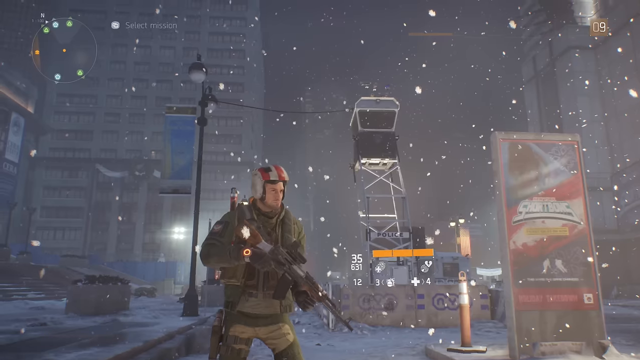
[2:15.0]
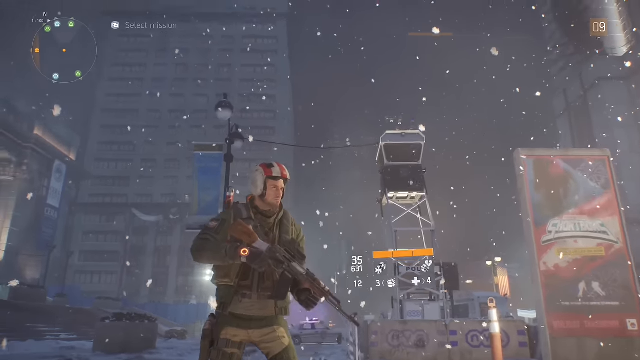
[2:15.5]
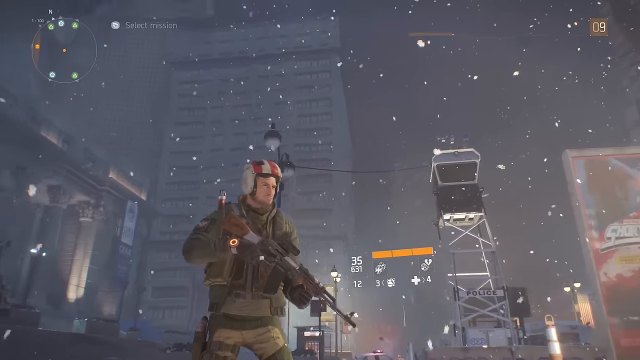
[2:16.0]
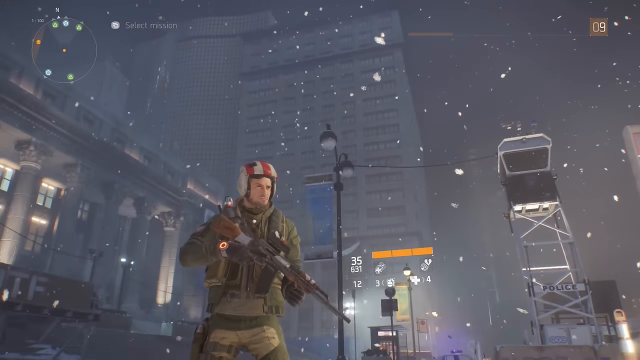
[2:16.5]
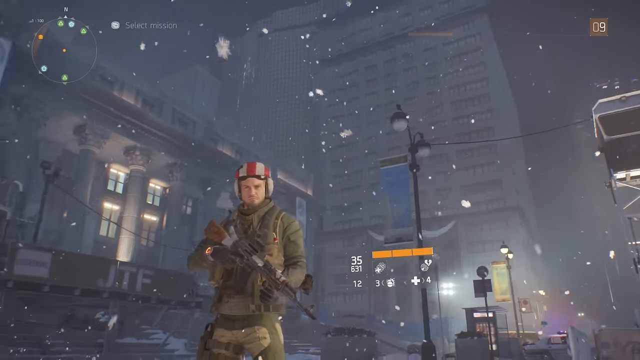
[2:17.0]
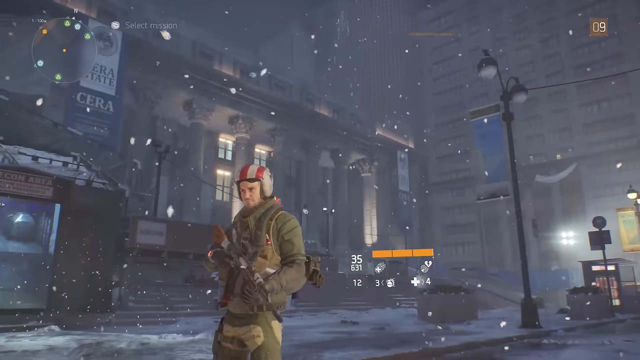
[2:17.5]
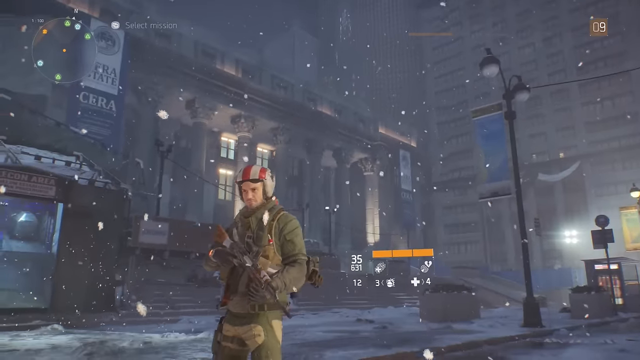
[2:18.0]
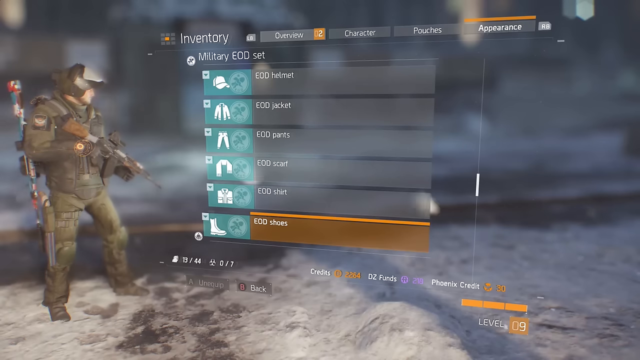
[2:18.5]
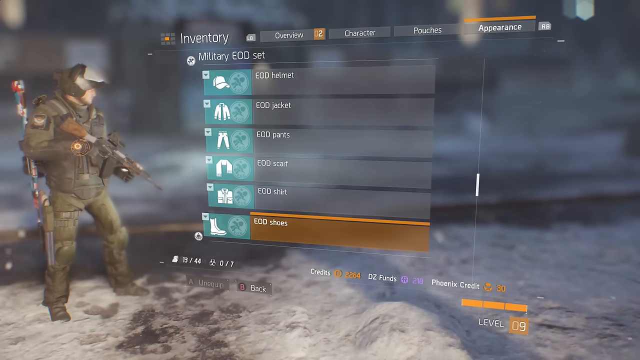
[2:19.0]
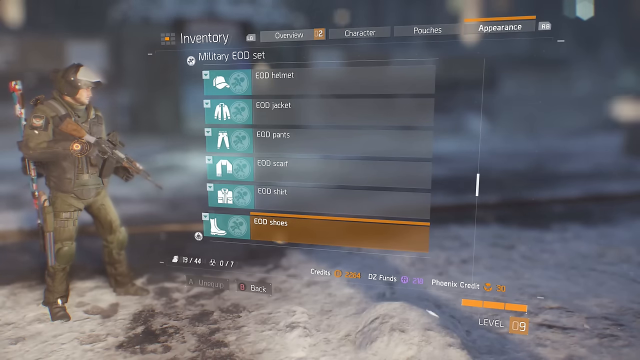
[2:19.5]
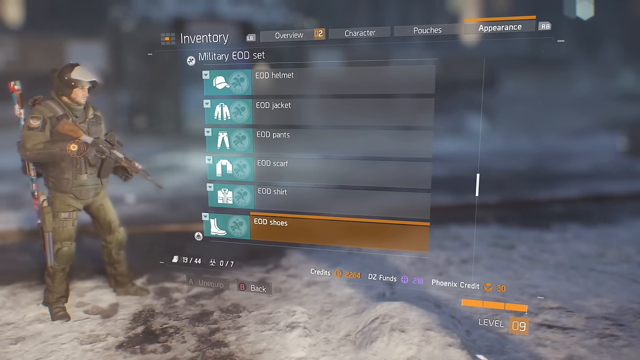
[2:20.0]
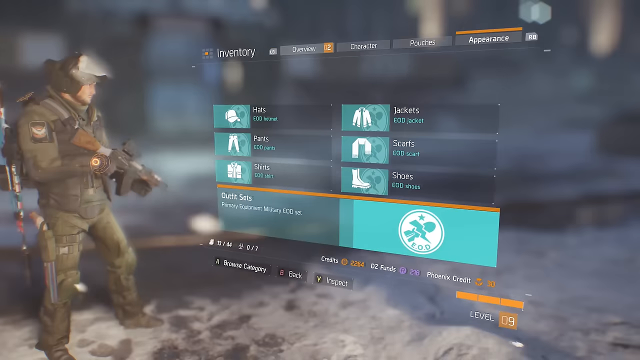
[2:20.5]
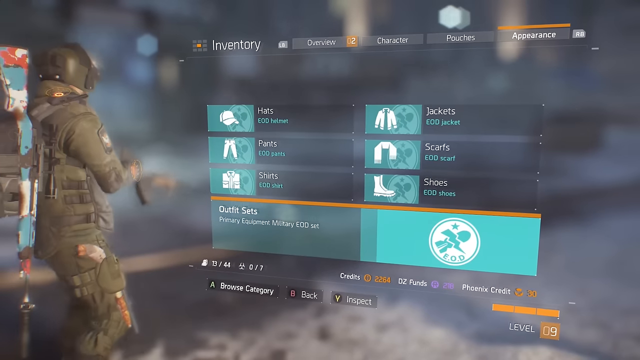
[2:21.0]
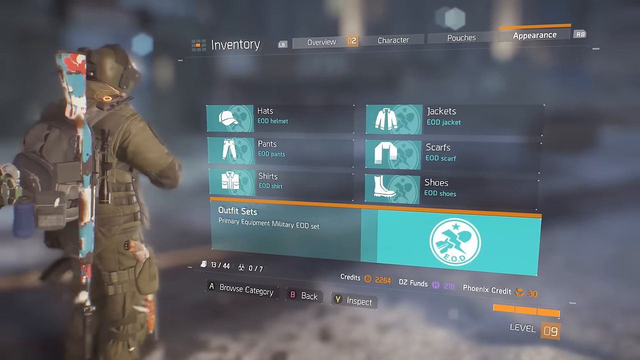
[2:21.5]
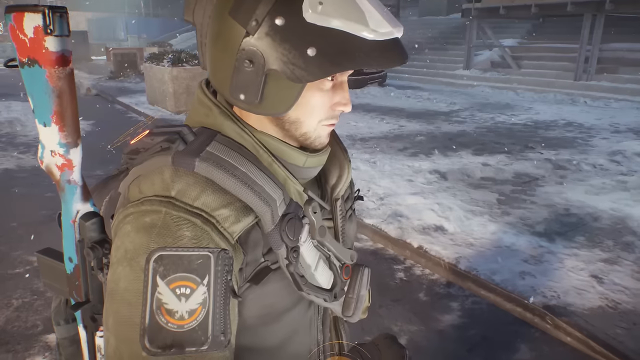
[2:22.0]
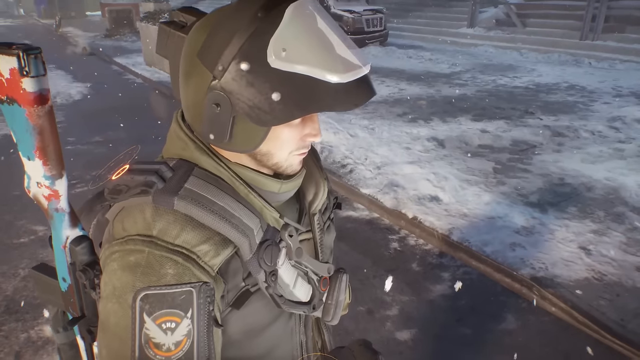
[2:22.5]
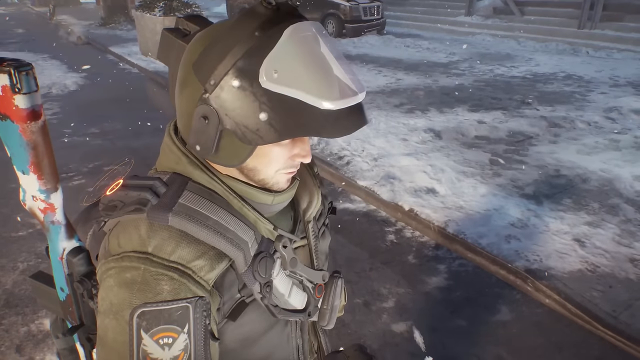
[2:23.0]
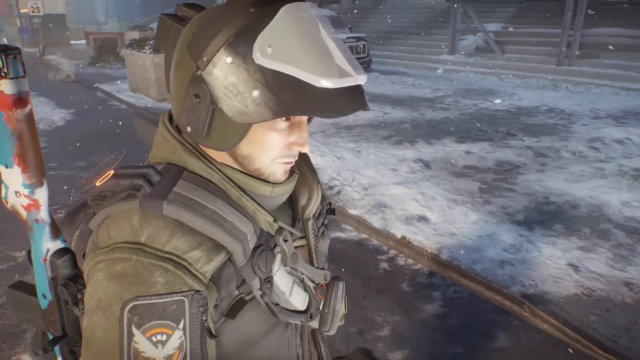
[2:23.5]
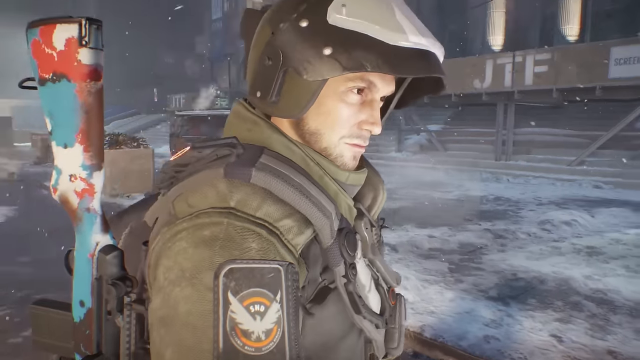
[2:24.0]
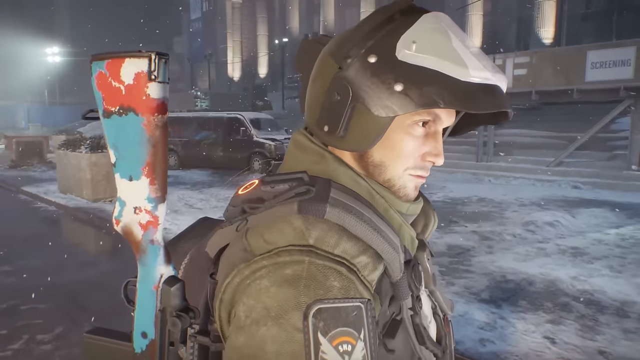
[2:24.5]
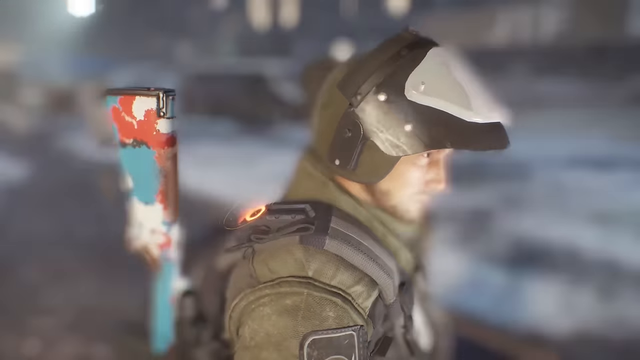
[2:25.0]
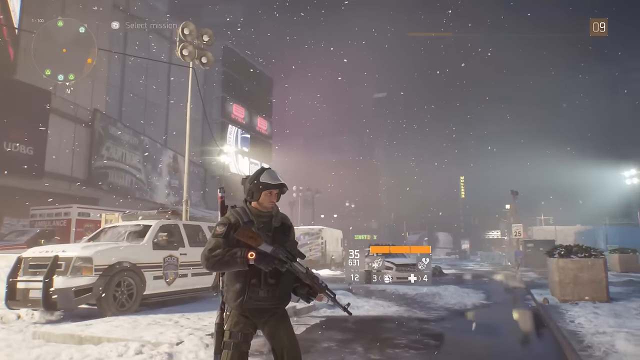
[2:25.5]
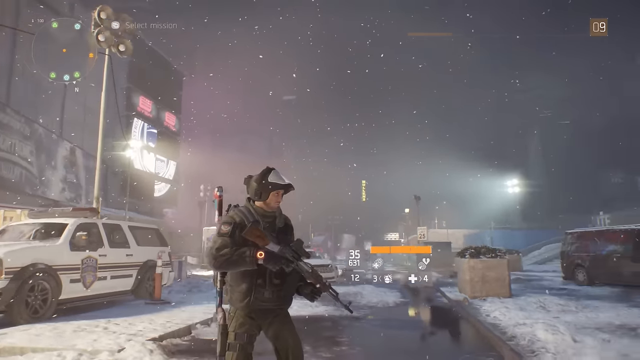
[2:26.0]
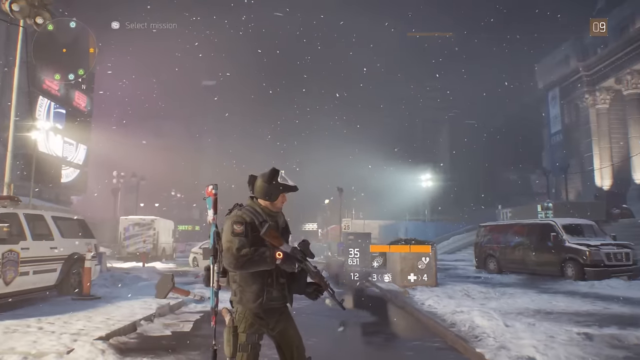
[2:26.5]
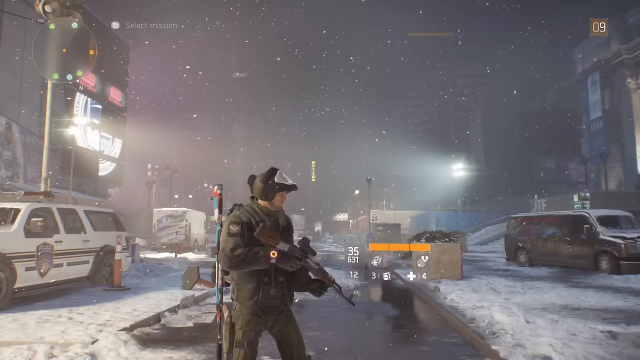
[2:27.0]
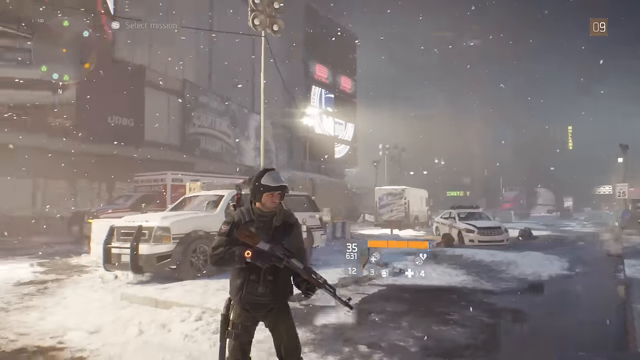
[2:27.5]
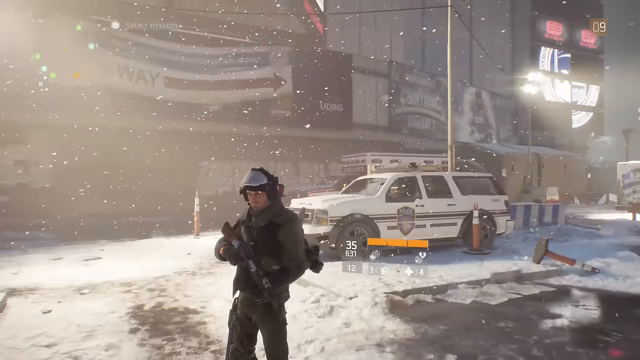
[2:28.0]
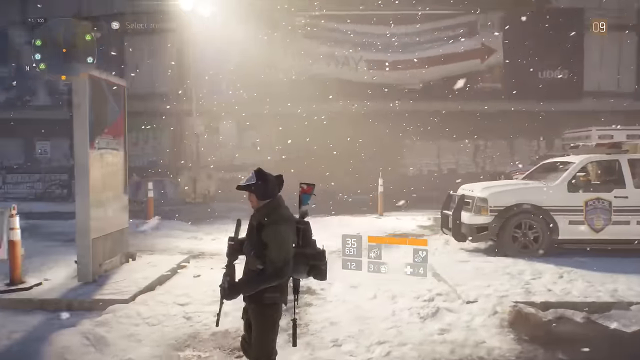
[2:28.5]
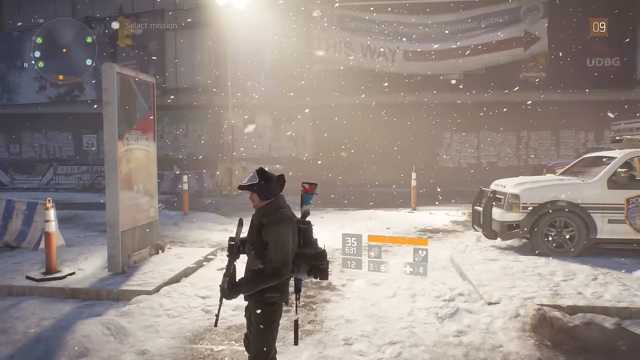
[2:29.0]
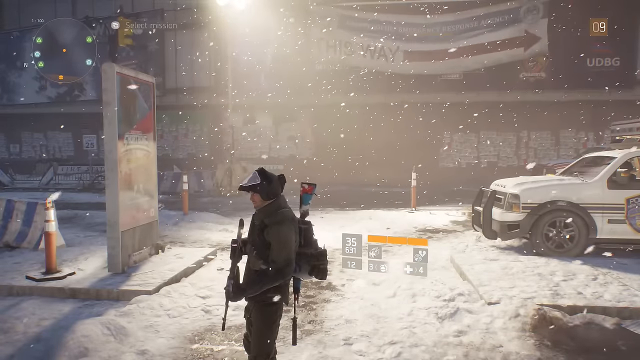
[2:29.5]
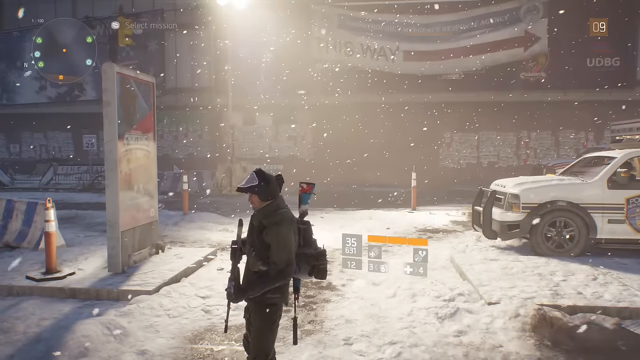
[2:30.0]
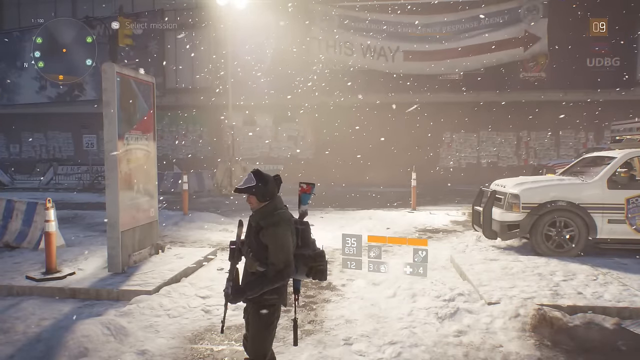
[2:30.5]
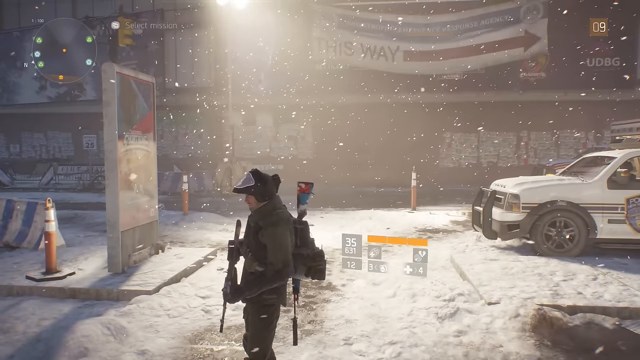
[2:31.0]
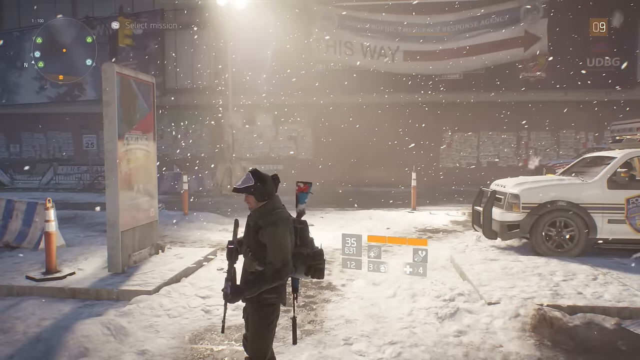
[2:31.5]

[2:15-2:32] The character wears a red and white pilot's helmet, a solid green jacket and green pants, and holds a gun in front of him in his right hand going down to his left hand, pointed toward the ground. The view goes to the menu, with the character on the left in the center of the screen. It says "military EOD set," or possibly "EDD set," and lists the "EDD helmet," "EDD jacket," "EDD pants," "EDD scarf," "EDD shirt" and "EDD shoes," with the shoes highlighted in orange. The character's helmet has changed to a dark forest green helmet with a black and white face shield that can be lowered but is currently up. The view pans around the character, who is now wearing the EDD set.